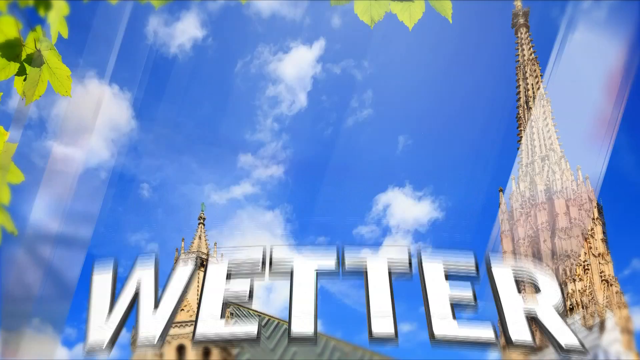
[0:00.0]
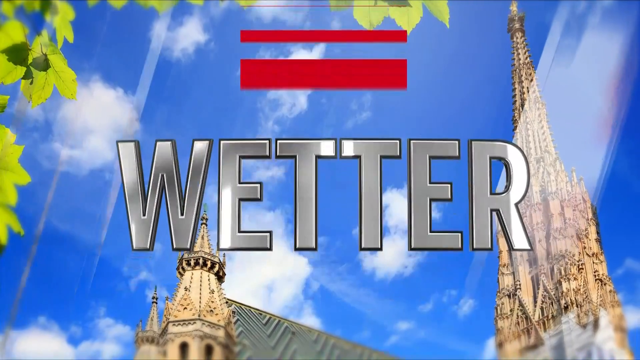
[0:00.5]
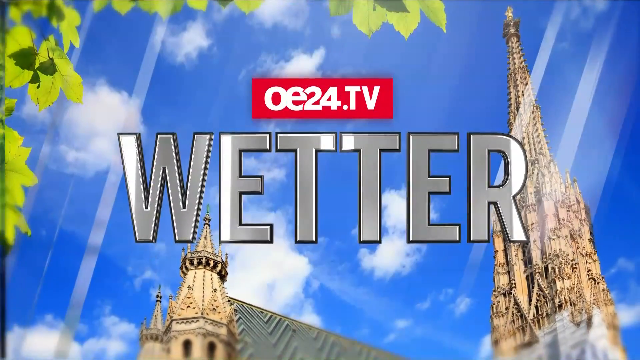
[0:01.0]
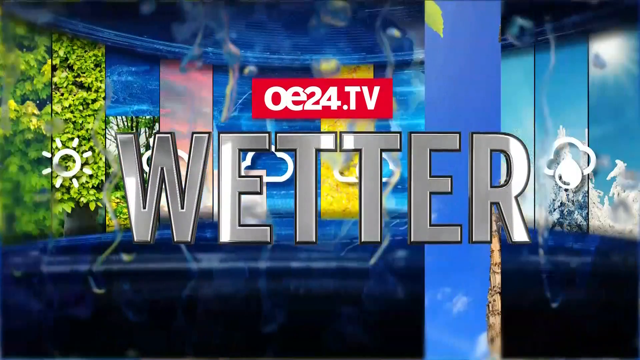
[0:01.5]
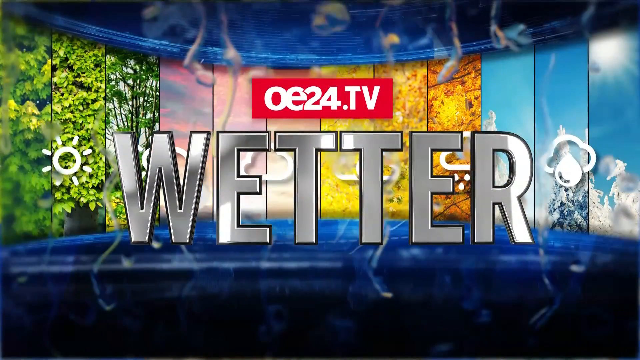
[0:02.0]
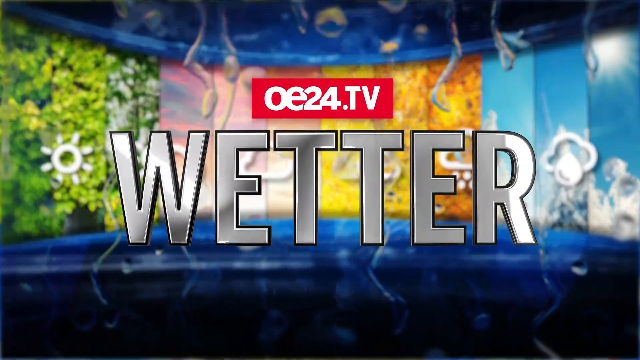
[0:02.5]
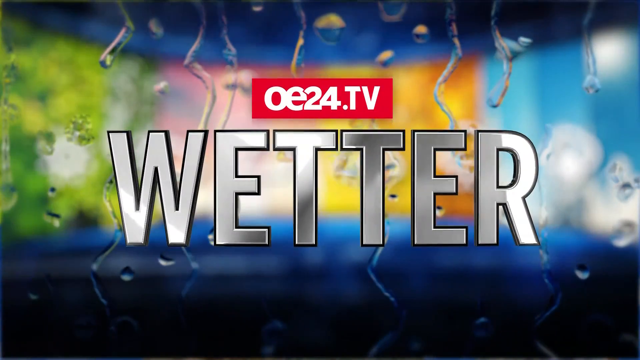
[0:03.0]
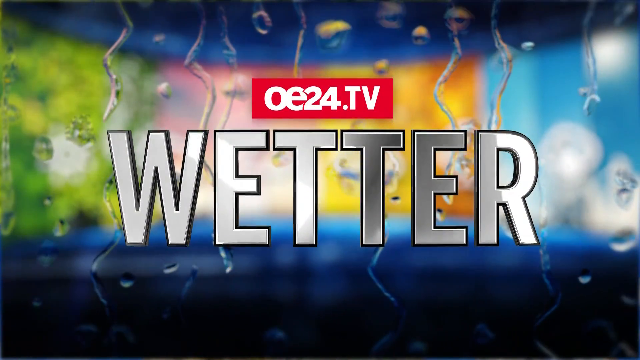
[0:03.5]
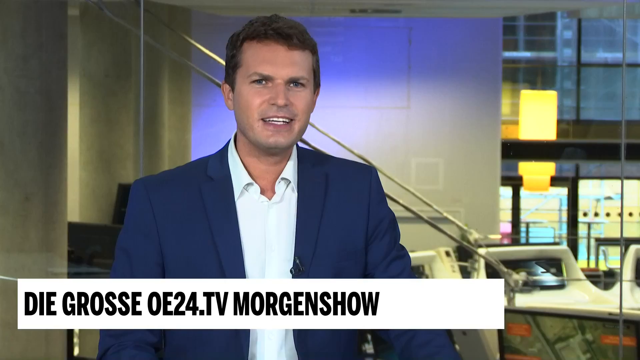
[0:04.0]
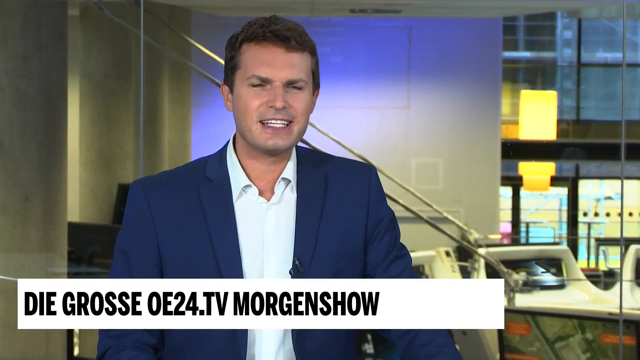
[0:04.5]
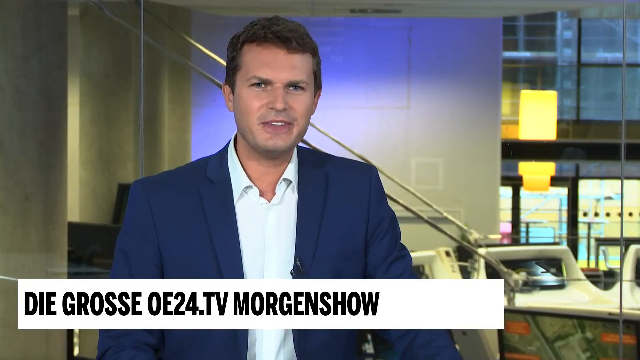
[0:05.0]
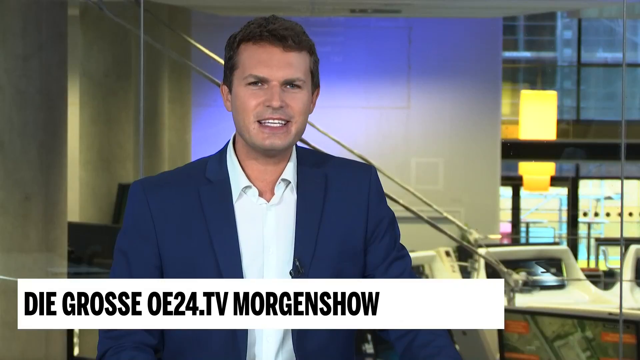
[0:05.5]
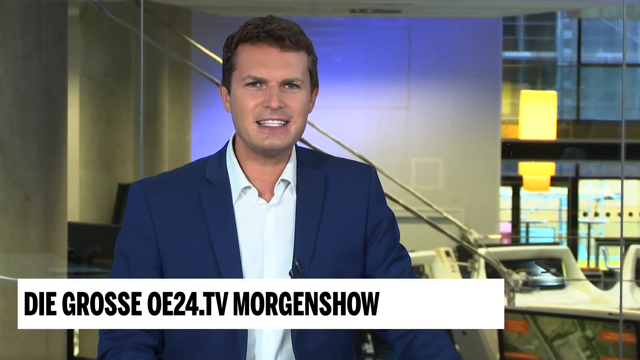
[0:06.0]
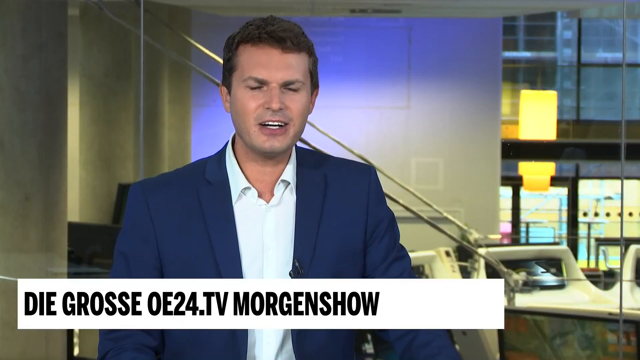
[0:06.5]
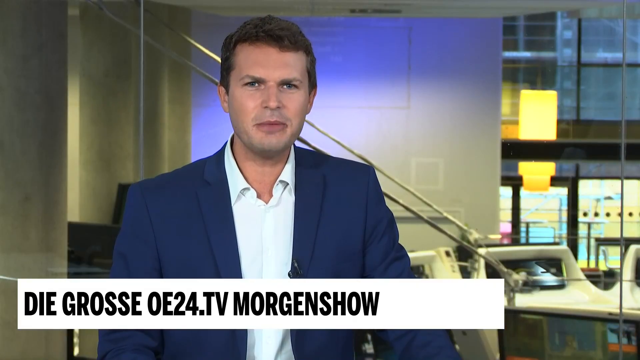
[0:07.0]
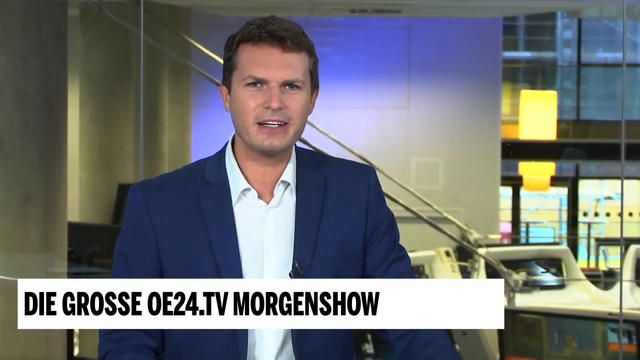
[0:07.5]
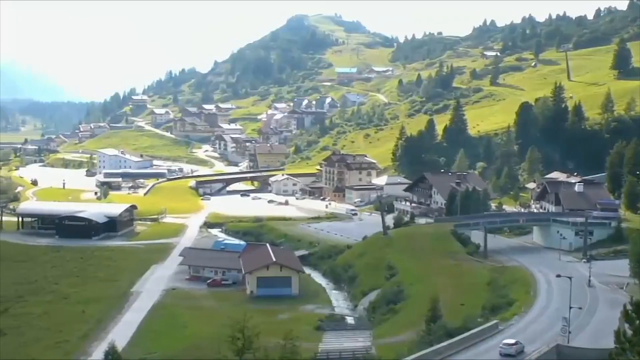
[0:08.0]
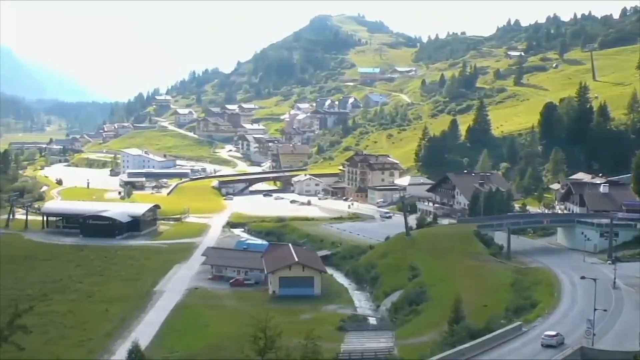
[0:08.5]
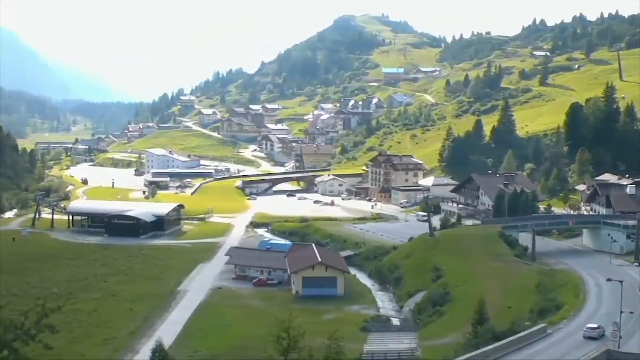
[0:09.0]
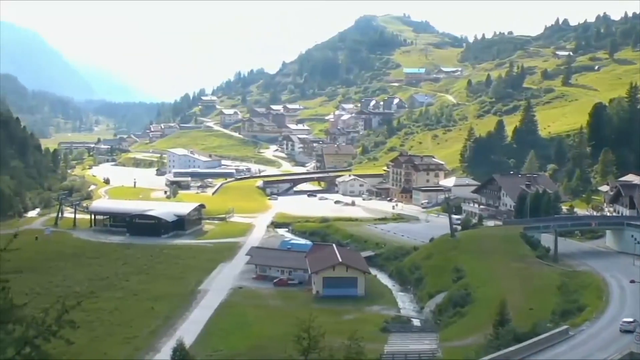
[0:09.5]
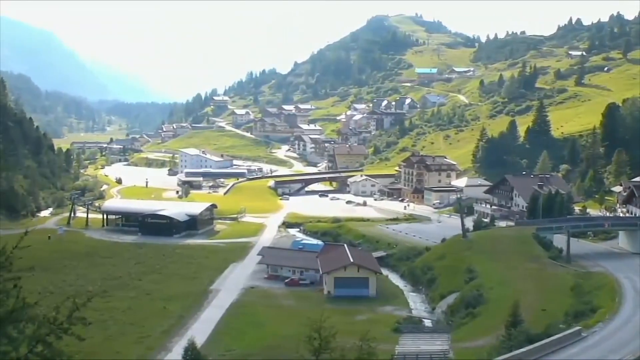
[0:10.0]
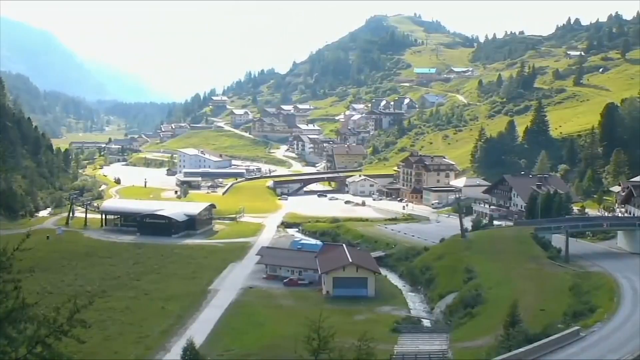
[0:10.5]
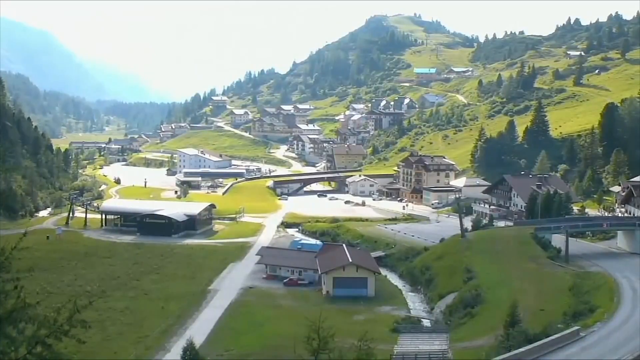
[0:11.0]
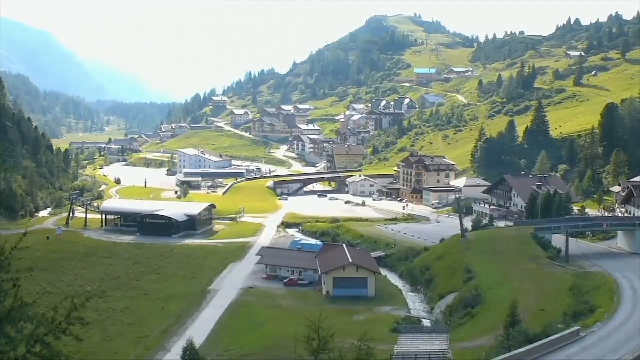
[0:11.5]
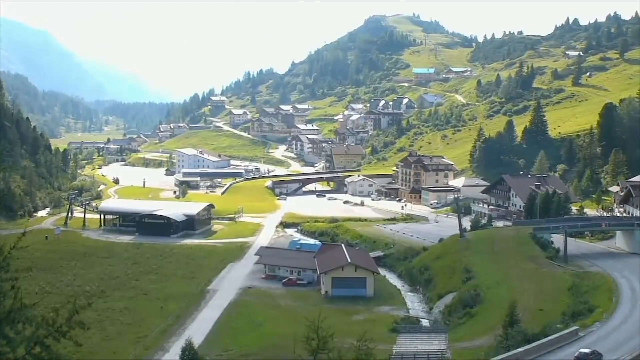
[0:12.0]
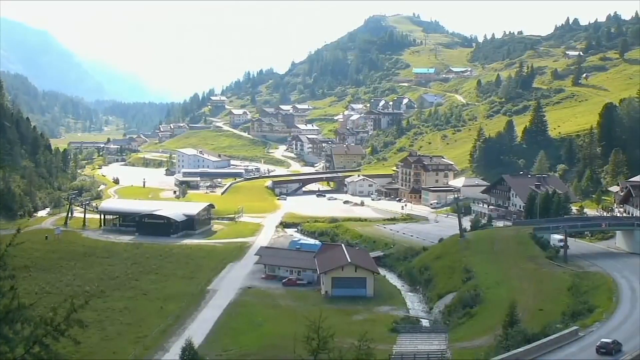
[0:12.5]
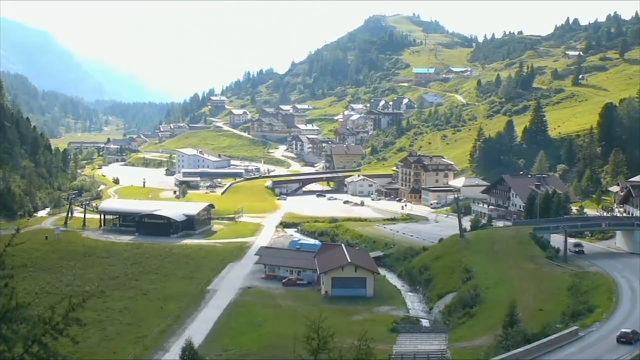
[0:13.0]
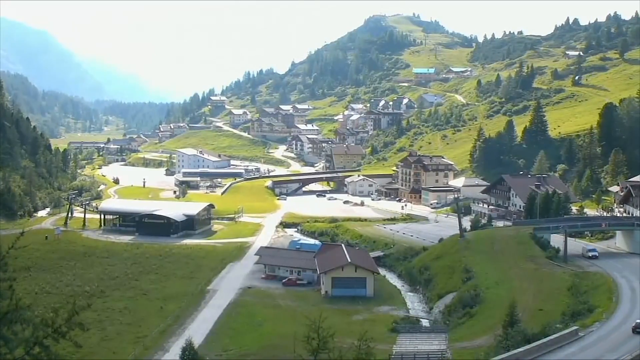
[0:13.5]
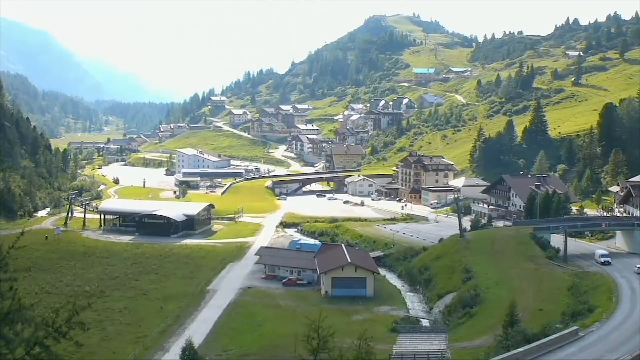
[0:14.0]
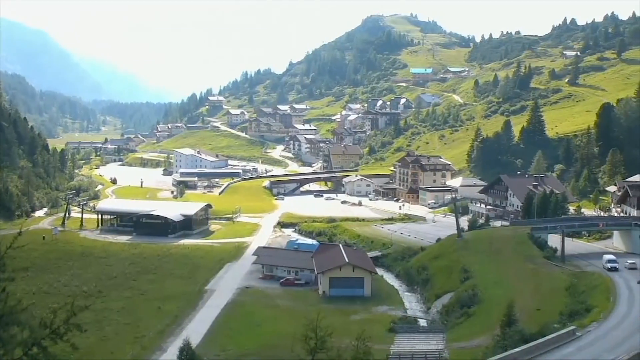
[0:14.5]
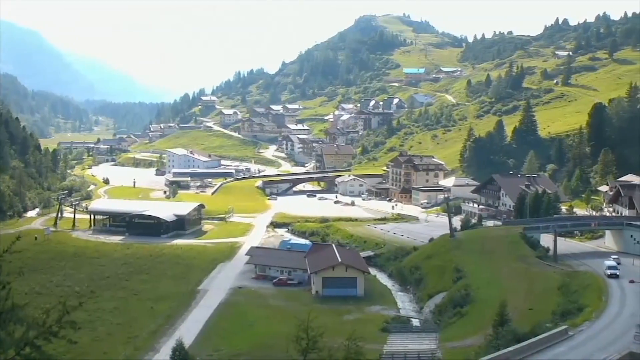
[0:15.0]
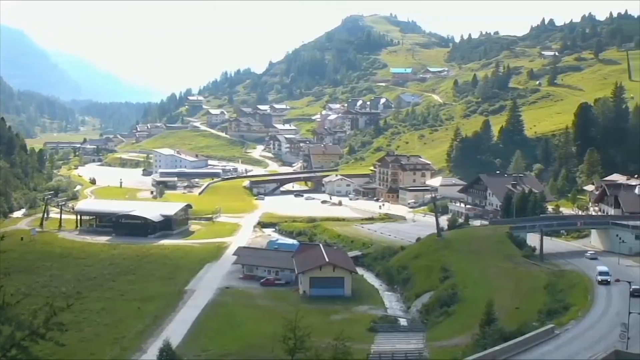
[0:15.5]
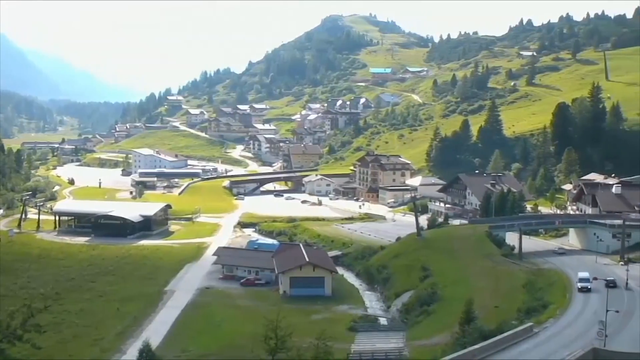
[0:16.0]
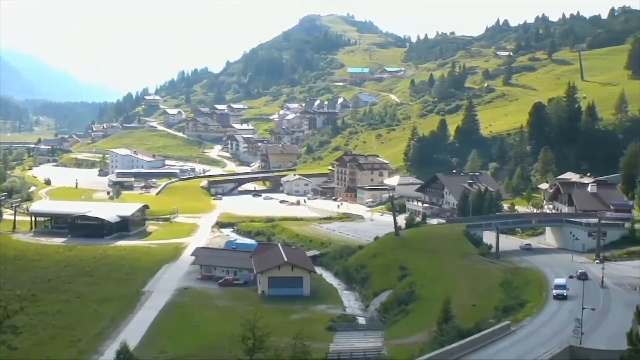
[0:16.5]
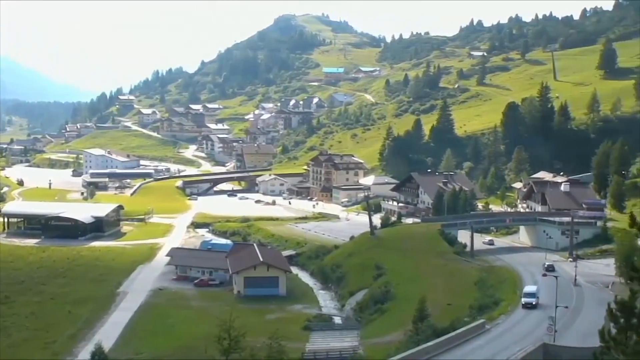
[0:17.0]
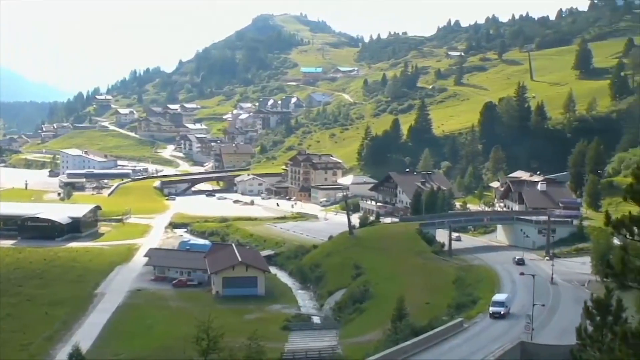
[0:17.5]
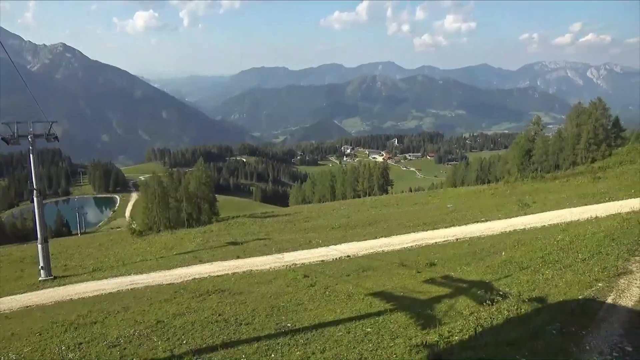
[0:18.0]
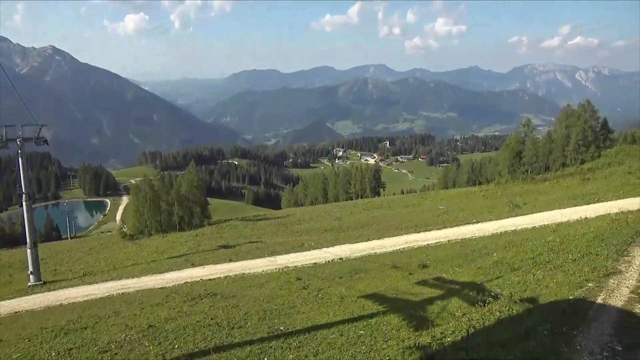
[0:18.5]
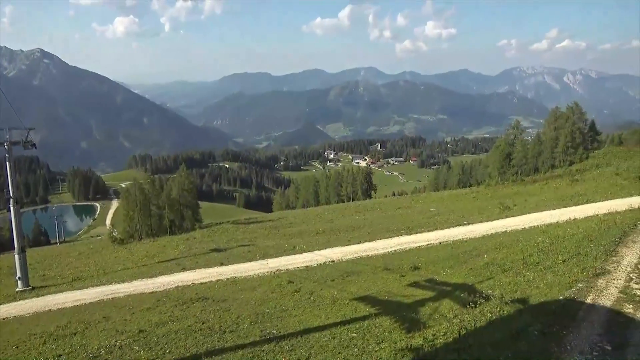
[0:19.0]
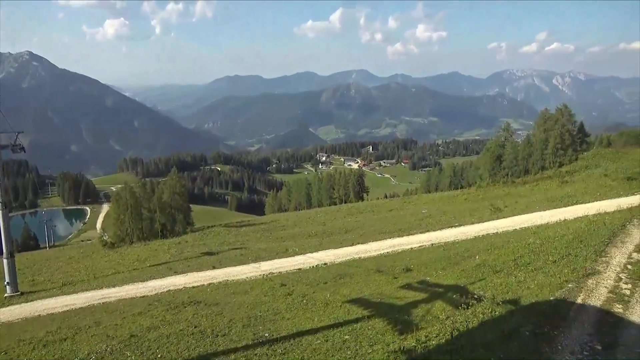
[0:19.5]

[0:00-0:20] The video opens on a blue sky with some white clouds, a headline reading "oe24.tv" and the word "WETTER", against a blue background with some tall buildings. A middle-aged man in a black suit, a white shirt without a tie and short hair sits in a newsroom or studio, reading the news to the viewer, and the camera focuses on him as he talks. The setting then changes to a residential area, where a vehicle moves along a road. The camera shows different parts of the area: small scattered buildings, a road and a large green field in the surroundings.